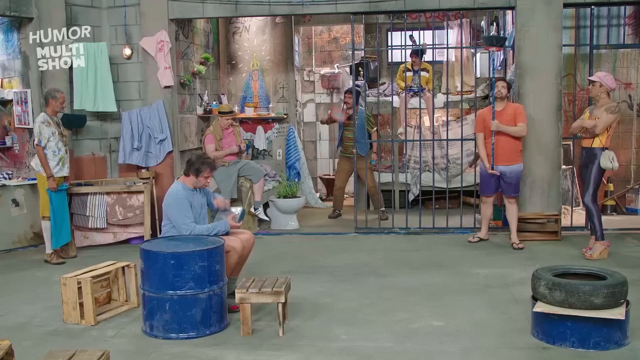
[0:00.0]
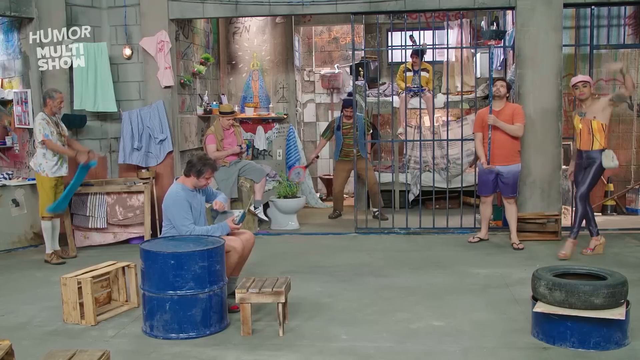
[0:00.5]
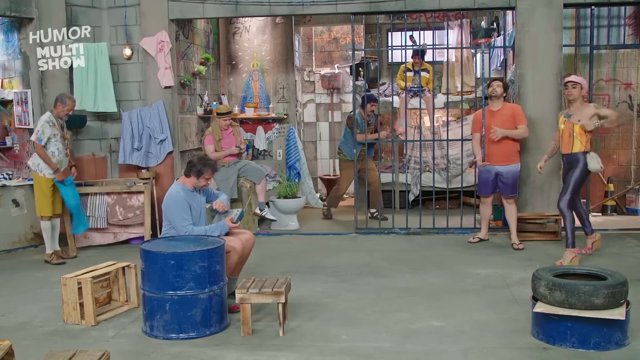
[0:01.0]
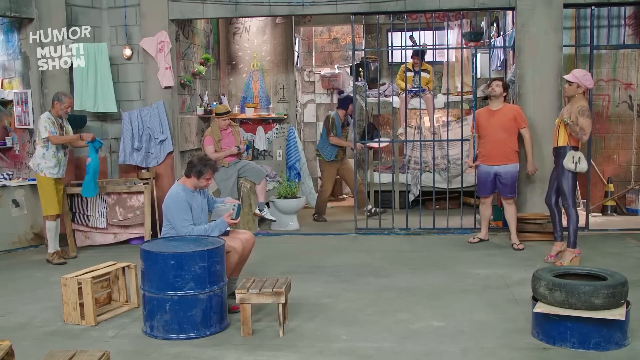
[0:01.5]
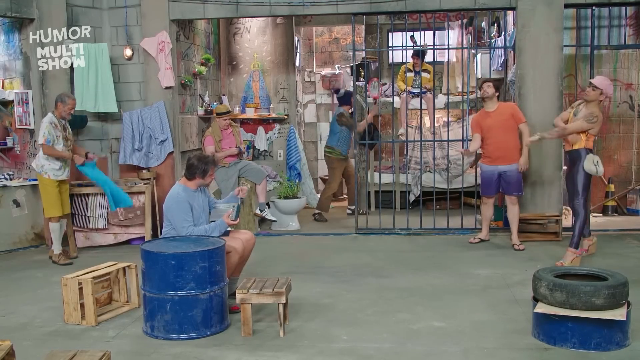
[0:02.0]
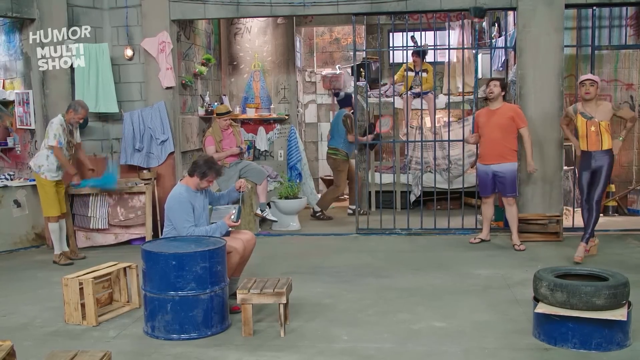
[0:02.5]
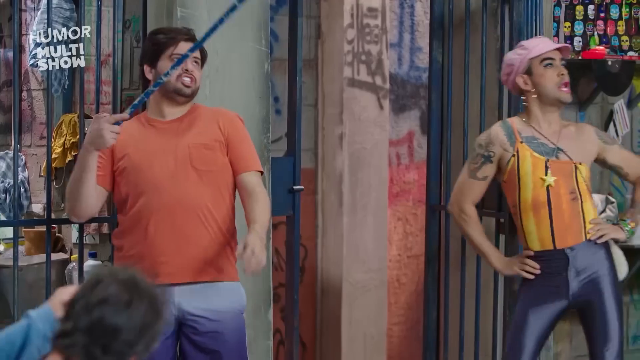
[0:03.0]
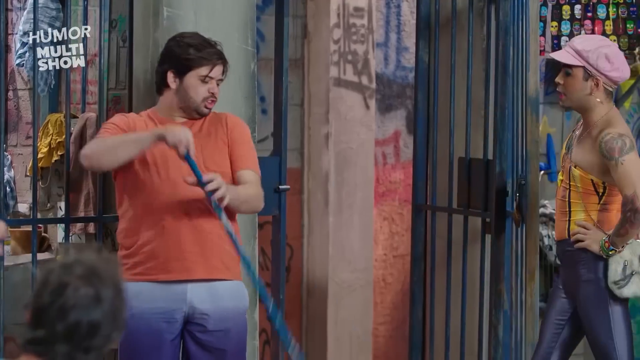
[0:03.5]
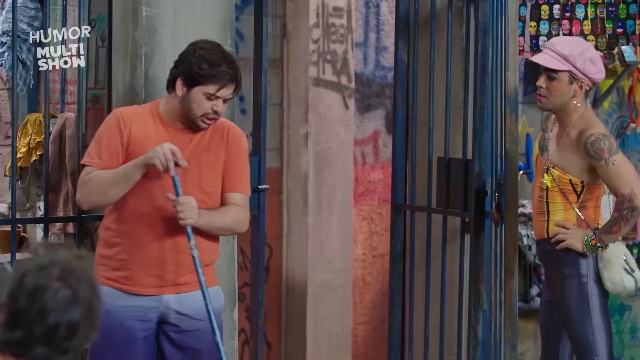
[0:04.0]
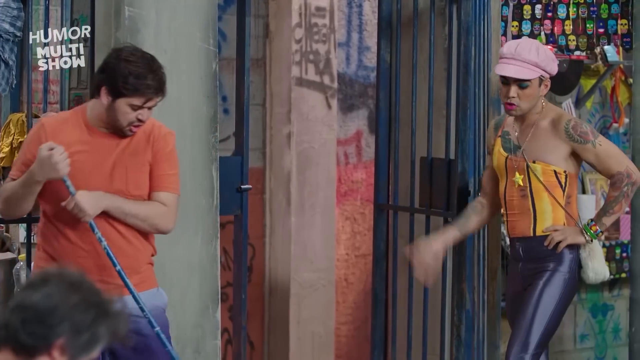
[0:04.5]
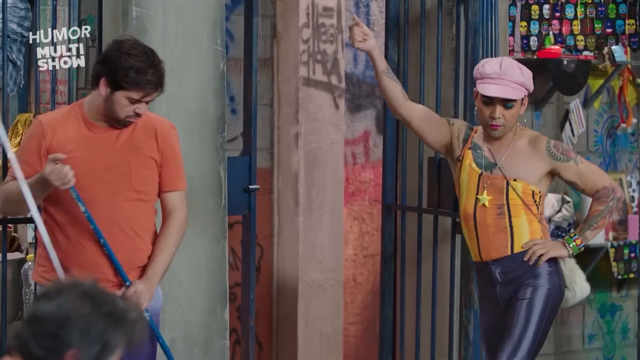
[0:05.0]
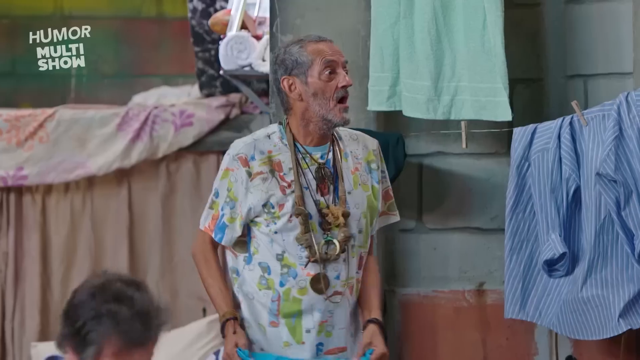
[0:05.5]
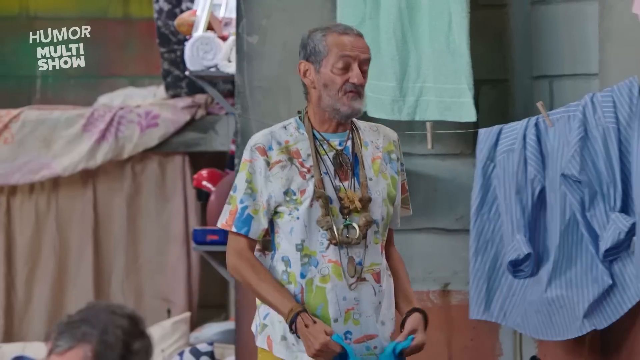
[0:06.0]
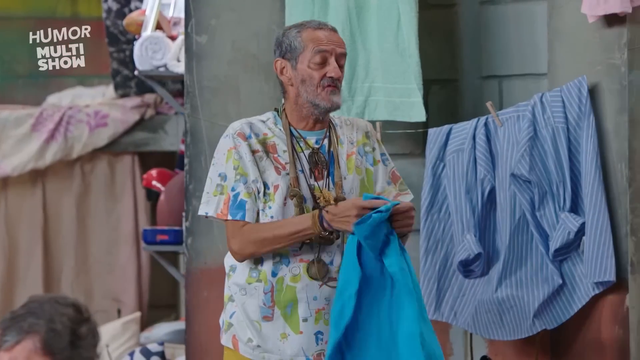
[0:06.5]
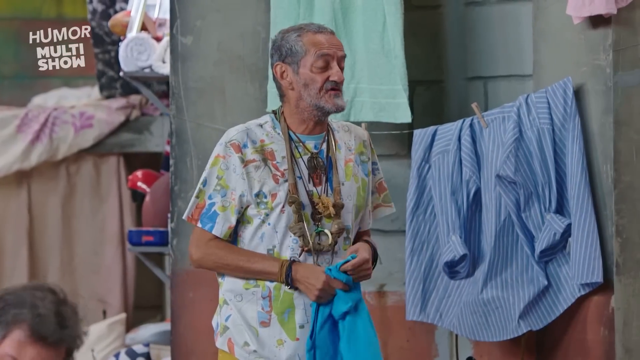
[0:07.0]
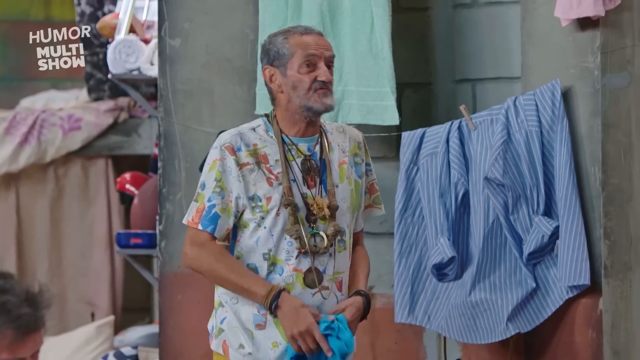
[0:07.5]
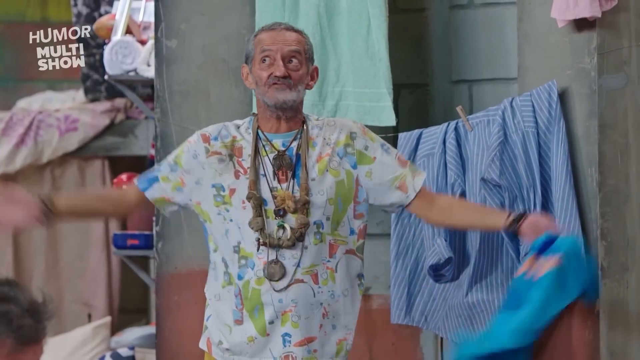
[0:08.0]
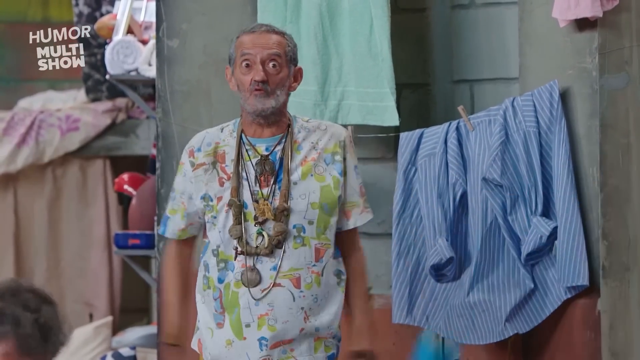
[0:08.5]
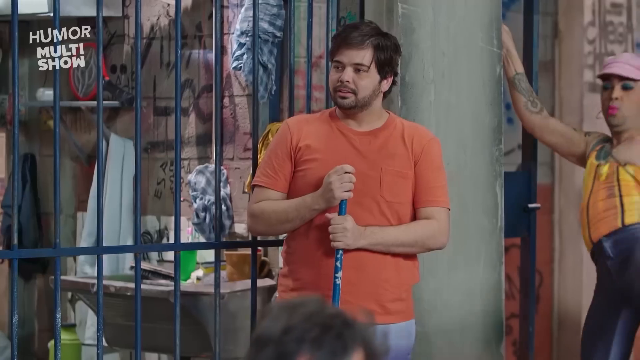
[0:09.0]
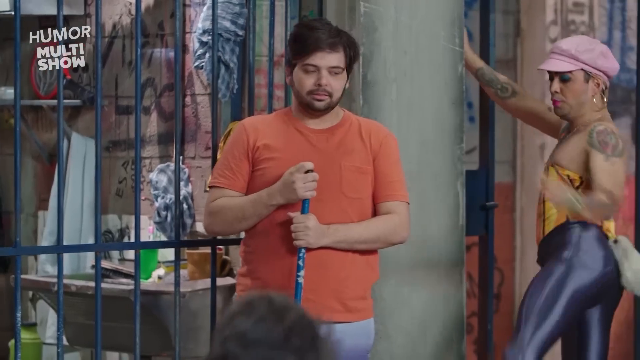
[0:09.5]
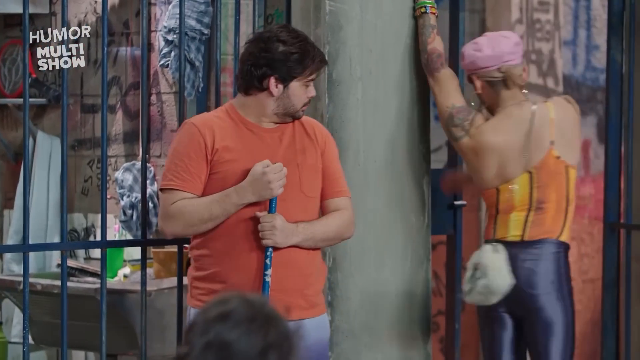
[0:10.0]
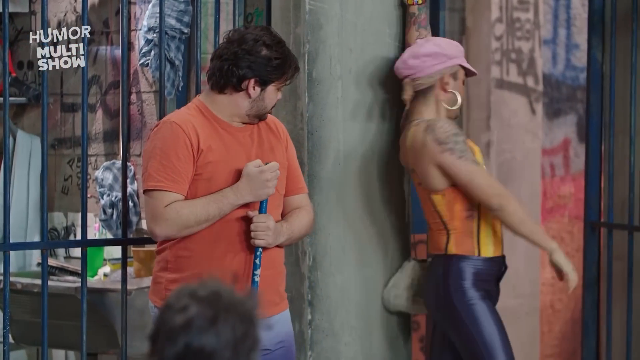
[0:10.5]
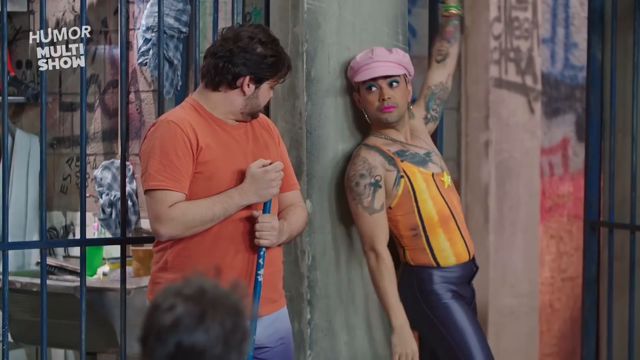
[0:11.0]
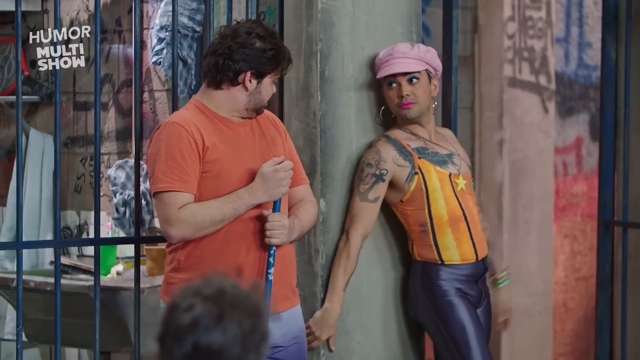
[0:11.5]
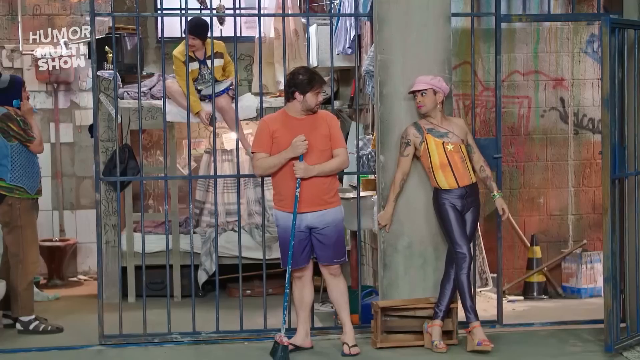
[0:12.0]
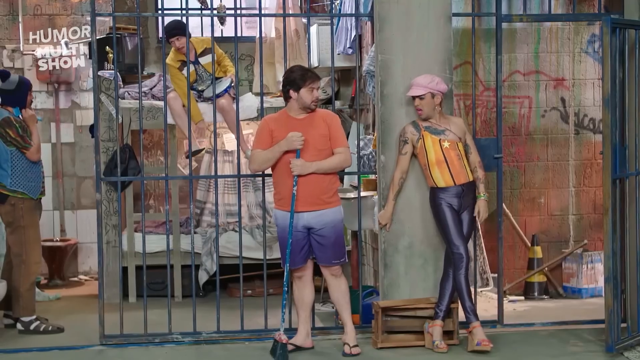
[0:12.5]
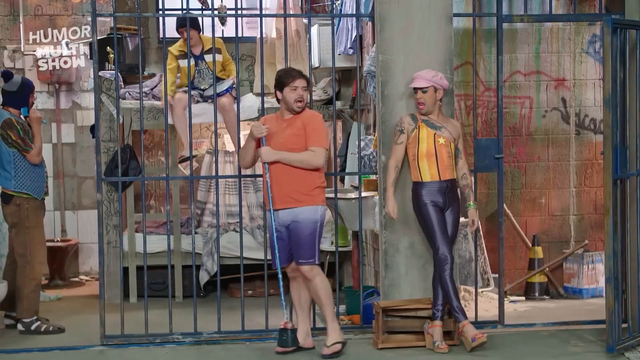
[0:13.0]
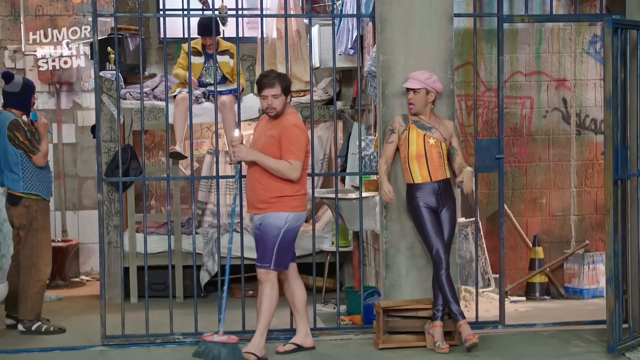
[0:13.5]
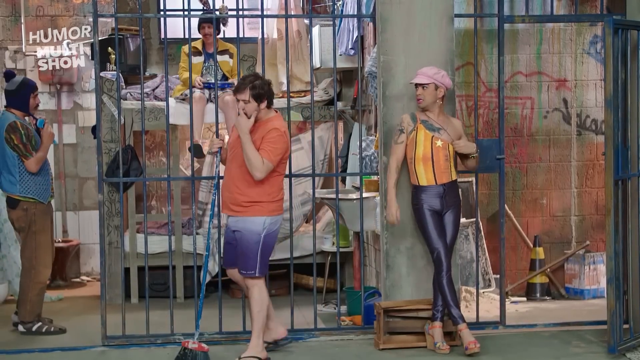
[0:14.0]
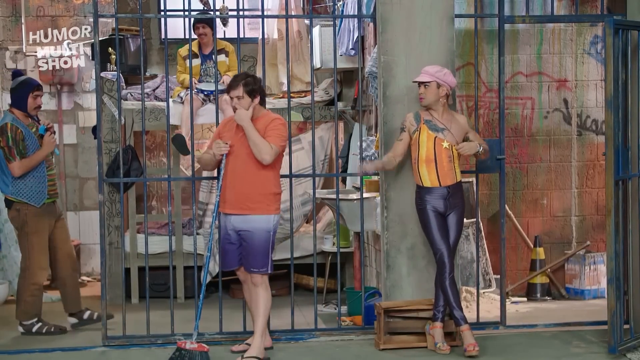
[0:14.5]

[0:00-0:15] This comedy skit is in Spanish and is called Humor Multishow. About five people, all dressed quite outlandishly, appear to be hanging out in some kind of holding cell at a jail. A crazy person sits on a bunk bed, and a Hispanic man looks through some bars like a cage. Off to the right is a transvestite-prostitute-looking figure wearing a pink beret. They are all talking, laughing and gesturing to each other. The transvestite prostitute takes off and yells at everyone in the jail cell. A somewhat overweight man in an orange shirt is pointing. Off to the left is a man wearing a funny hat and a blue vest. The transvestite prostitute storms all around the cell.